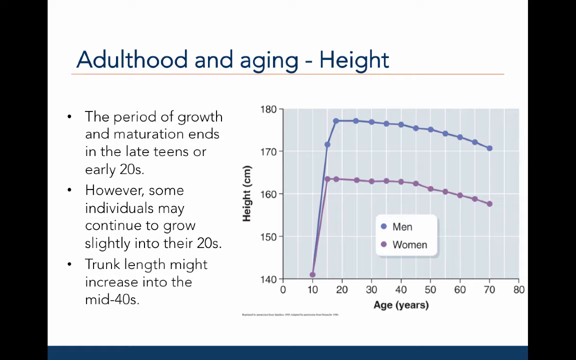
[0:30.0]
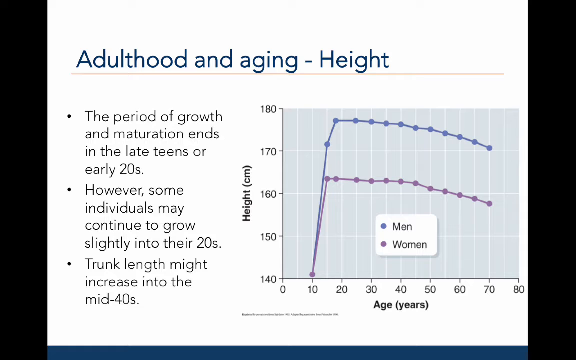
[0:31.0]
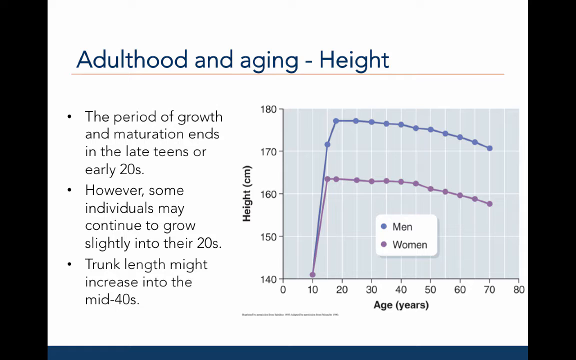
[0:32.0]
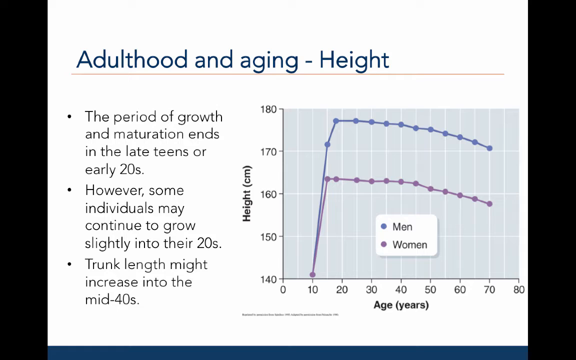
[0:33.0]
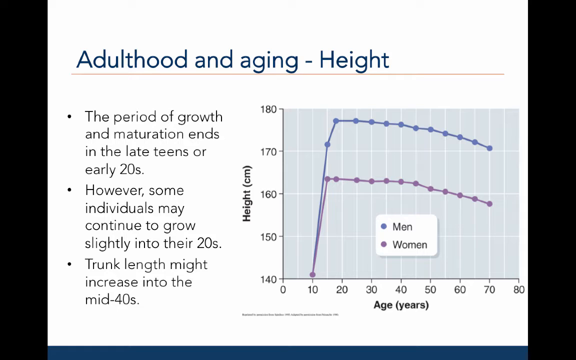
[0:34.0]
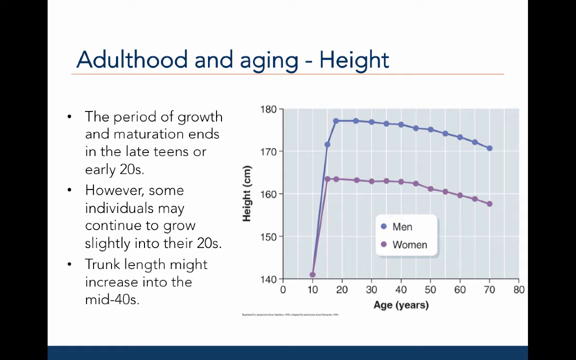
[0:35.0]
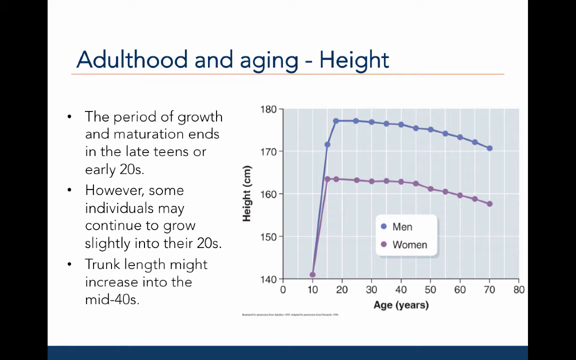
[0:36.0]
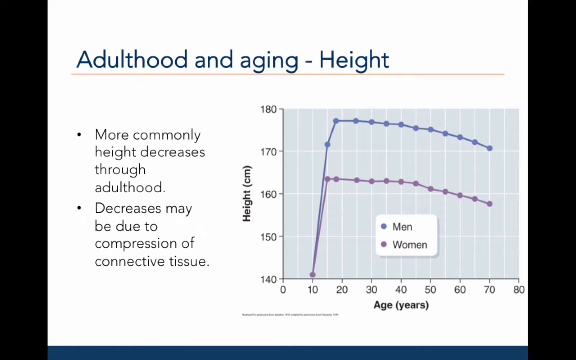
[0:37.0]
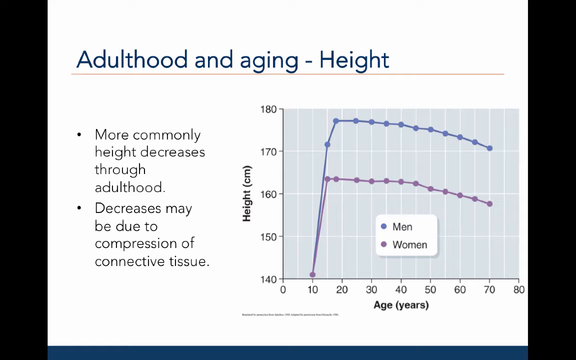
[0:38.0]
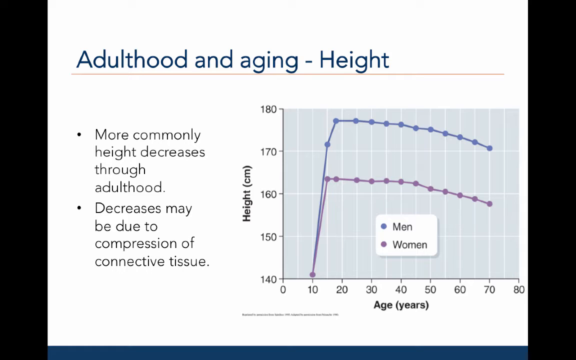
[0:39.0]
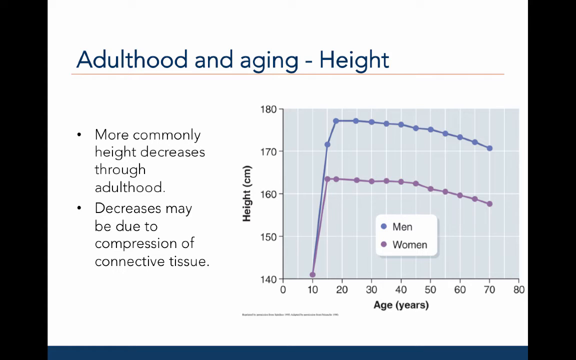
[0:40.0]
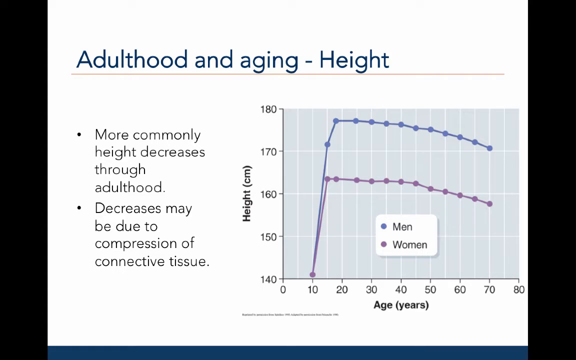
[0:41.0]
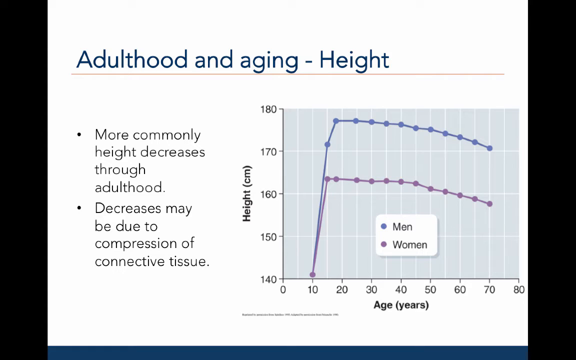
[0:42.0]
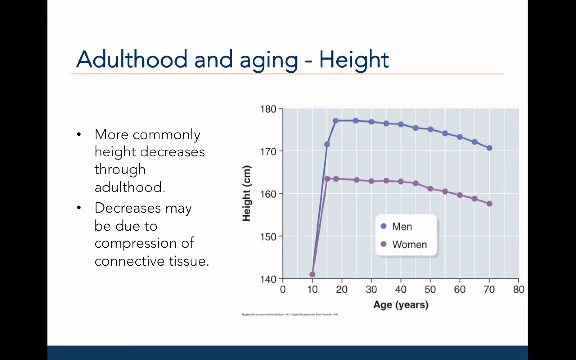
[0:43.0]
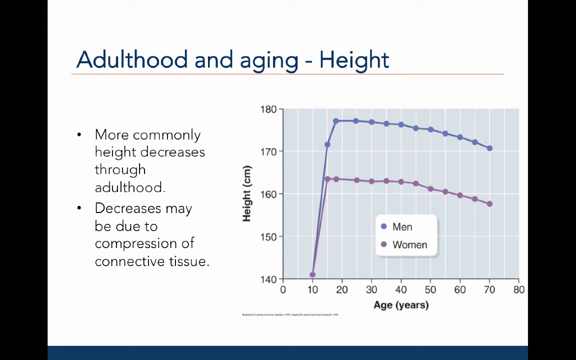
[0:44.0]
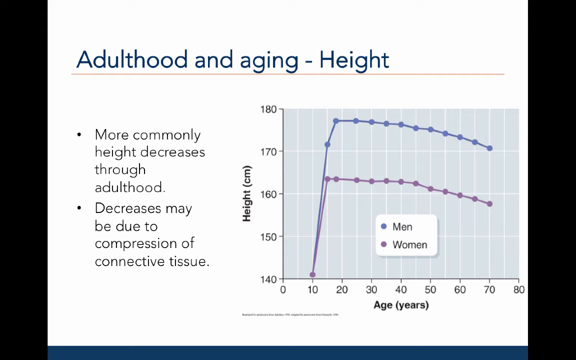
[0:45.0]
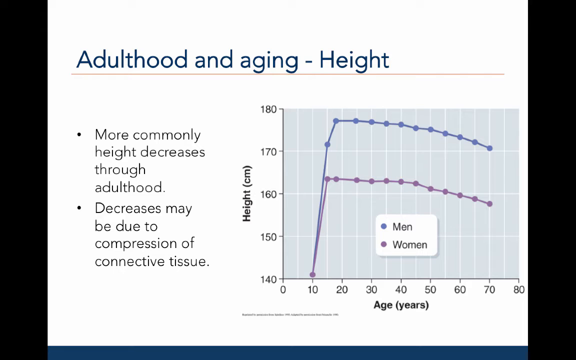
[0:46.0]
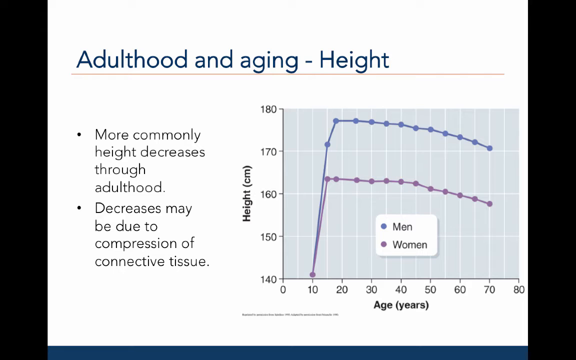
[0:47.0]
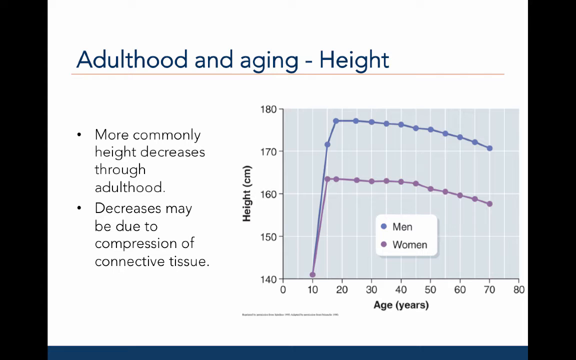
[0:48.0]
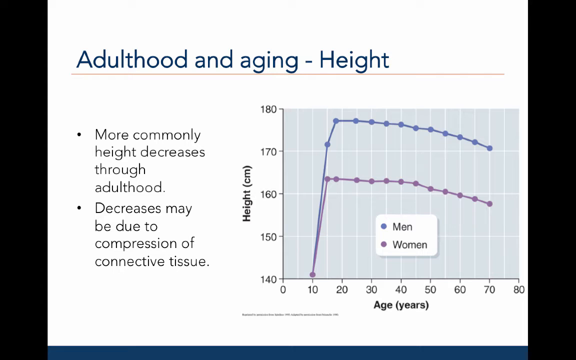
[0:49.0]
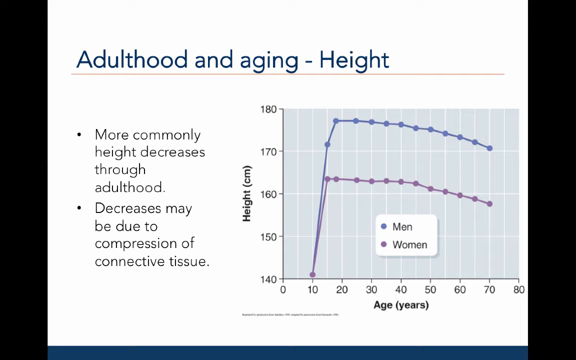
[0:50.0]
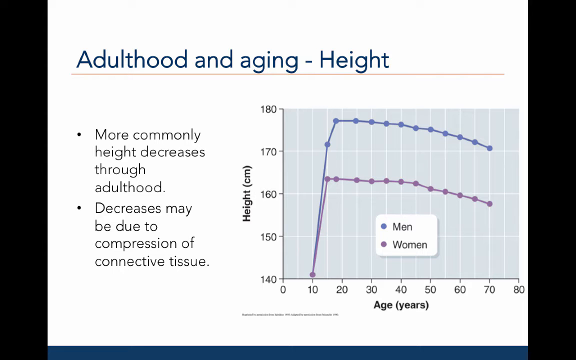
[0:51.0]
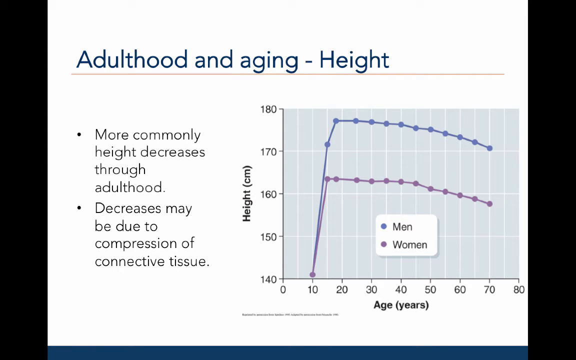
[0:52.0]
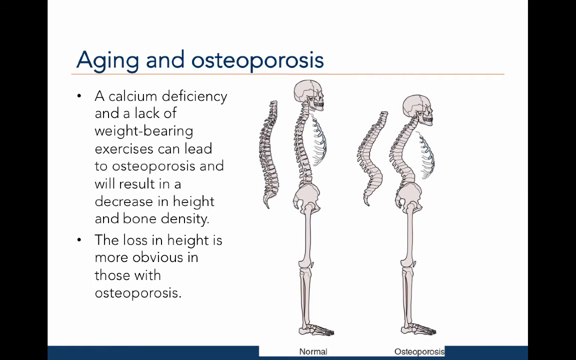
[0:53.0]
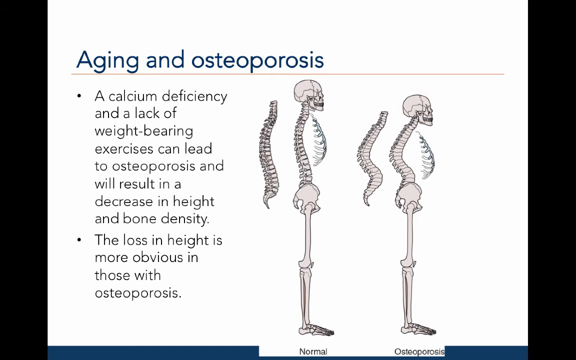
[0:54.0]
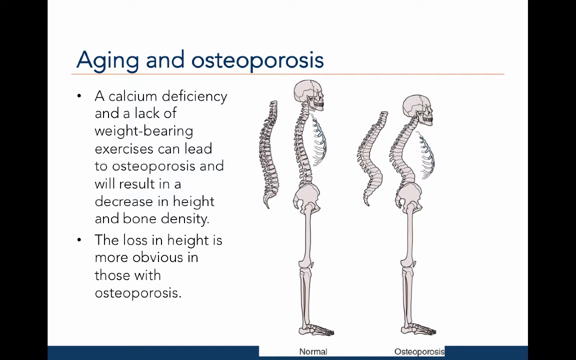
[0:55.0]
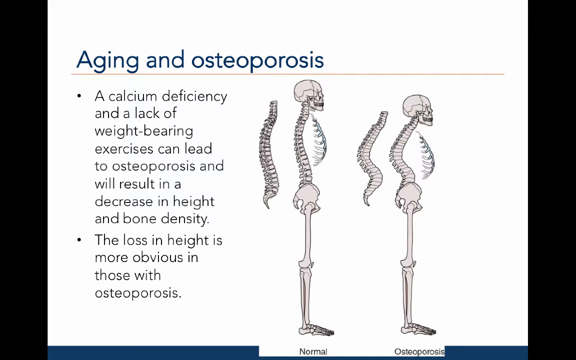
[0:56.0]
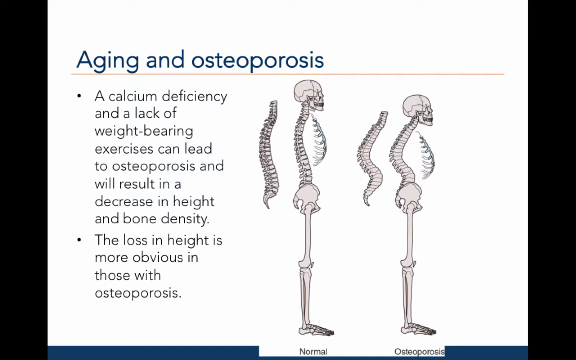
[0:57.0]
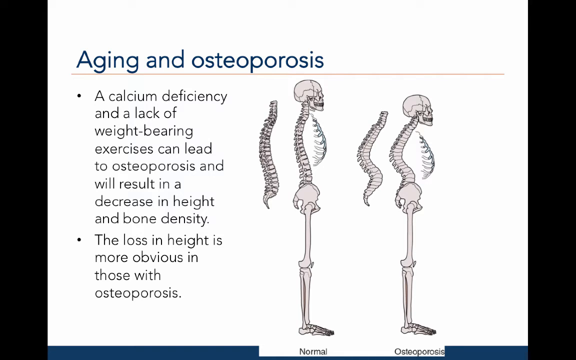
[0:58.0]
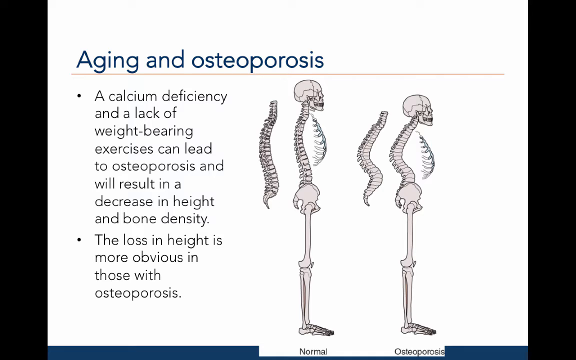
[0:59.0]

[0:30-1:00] The adulthood and aging presentation continues with the height chart for men and women. Text reads "more commonly, height decreases through adulthood. Decreases may be due to compression of connective tissues." A diagram titled "aging and osteoporosis" appears, with text stating that "a calcium deficiency and the lack of weight-bearing exercises can lead to osteoporosis and will result in a decrease in height and bone density. The loss in height is more obvious in those with osteoporosis."